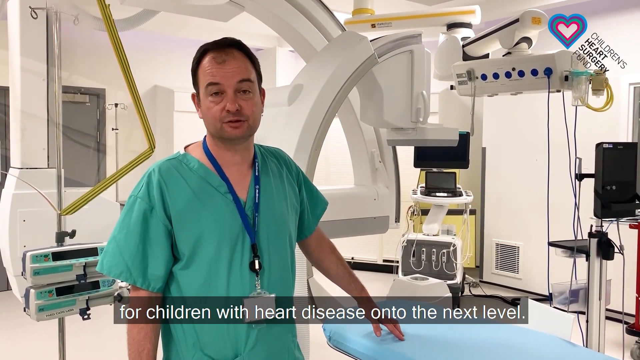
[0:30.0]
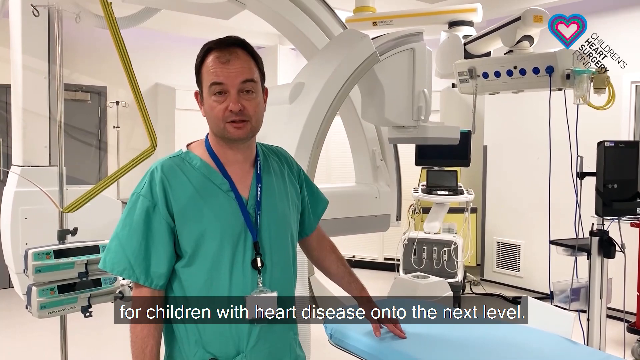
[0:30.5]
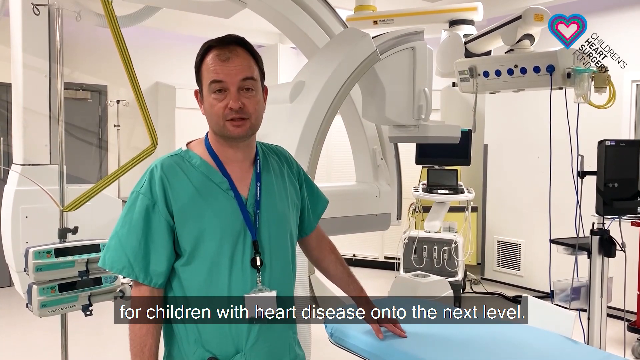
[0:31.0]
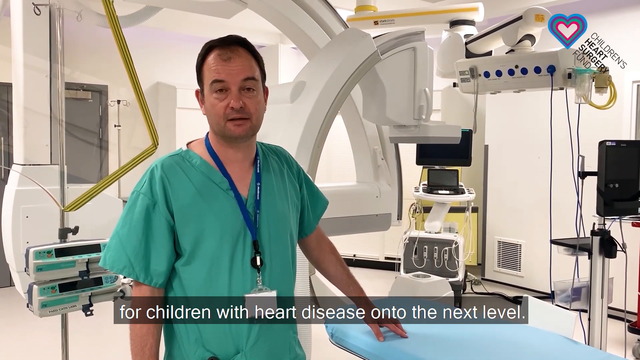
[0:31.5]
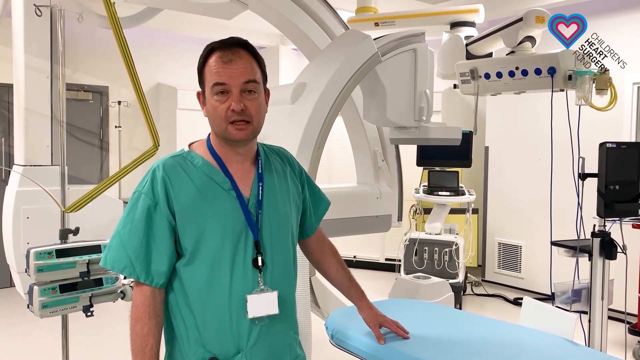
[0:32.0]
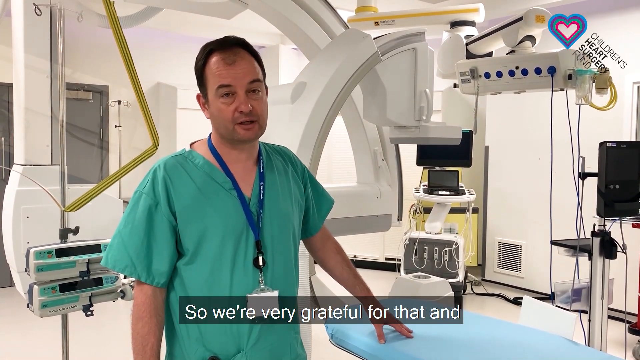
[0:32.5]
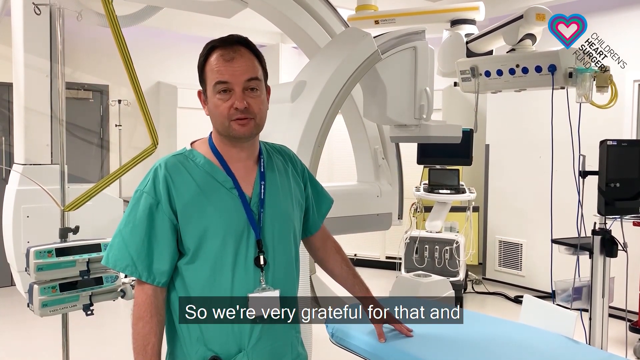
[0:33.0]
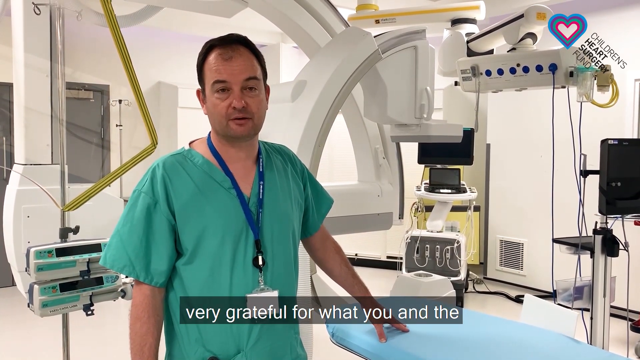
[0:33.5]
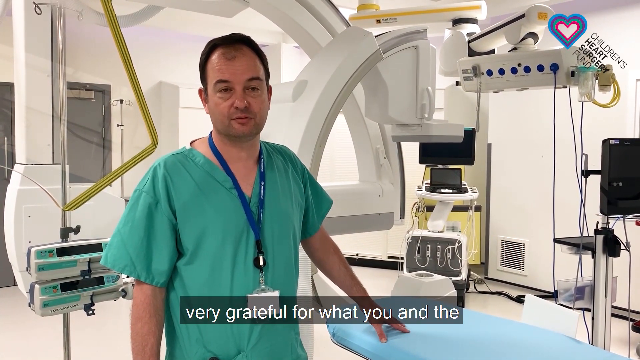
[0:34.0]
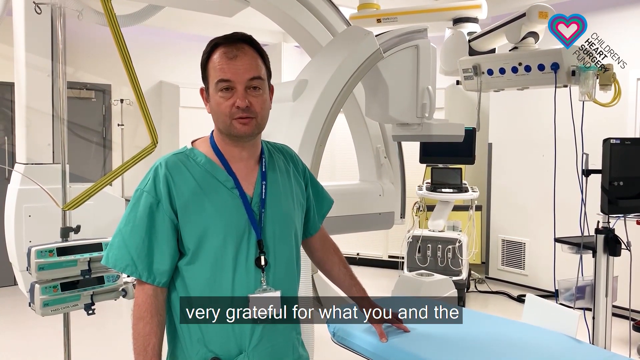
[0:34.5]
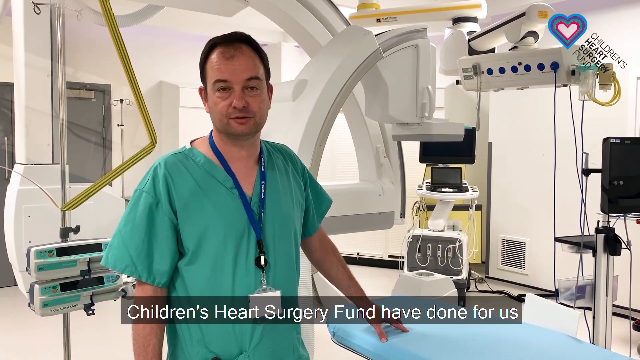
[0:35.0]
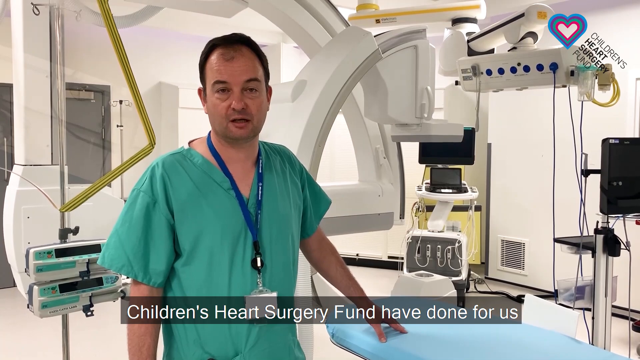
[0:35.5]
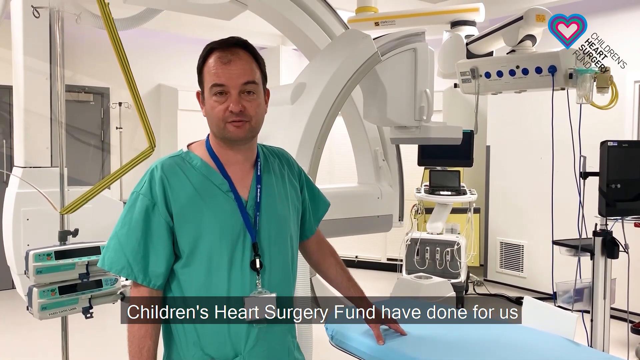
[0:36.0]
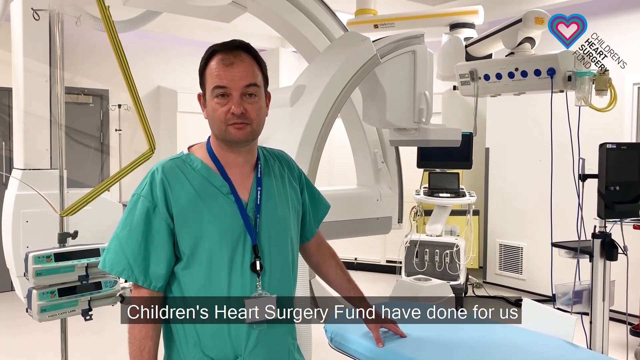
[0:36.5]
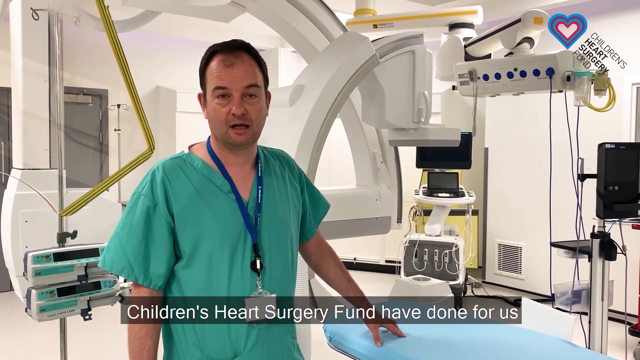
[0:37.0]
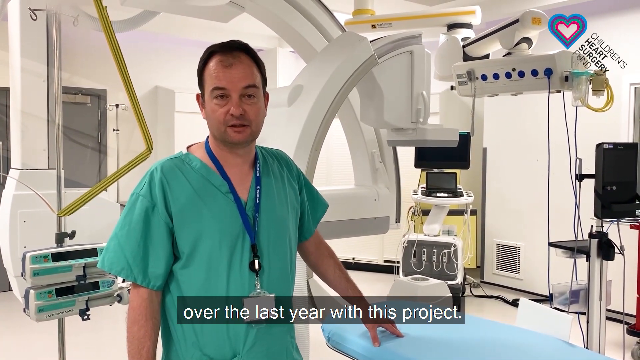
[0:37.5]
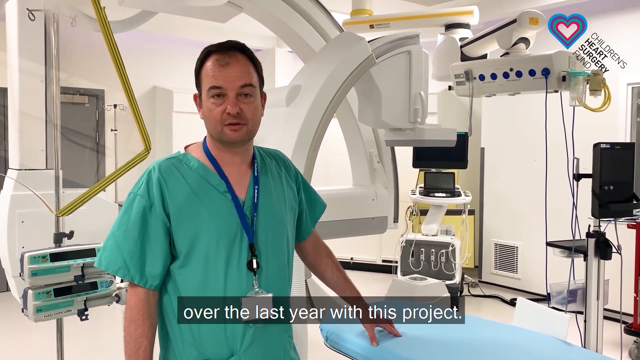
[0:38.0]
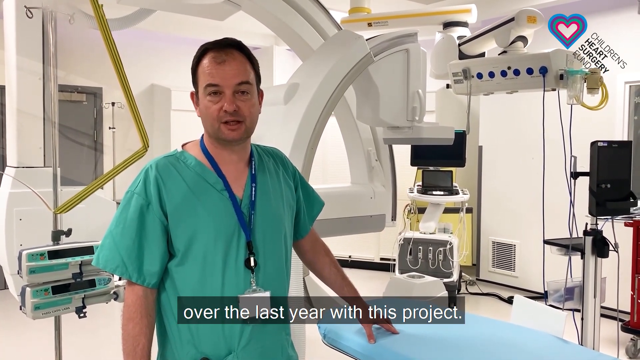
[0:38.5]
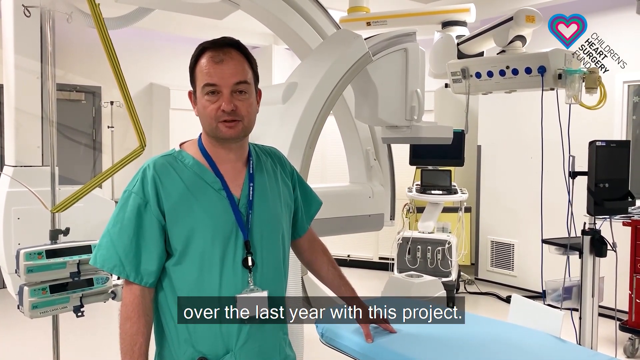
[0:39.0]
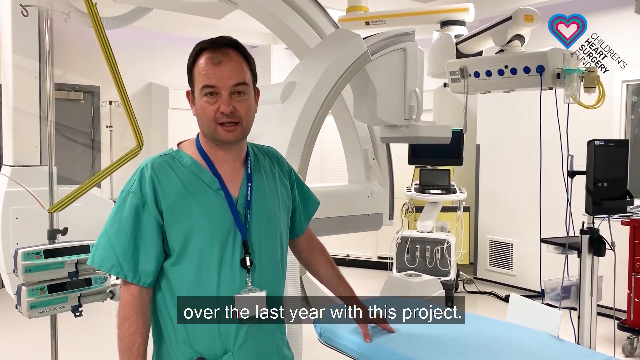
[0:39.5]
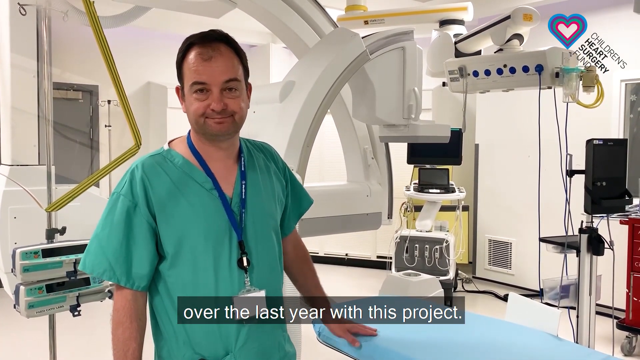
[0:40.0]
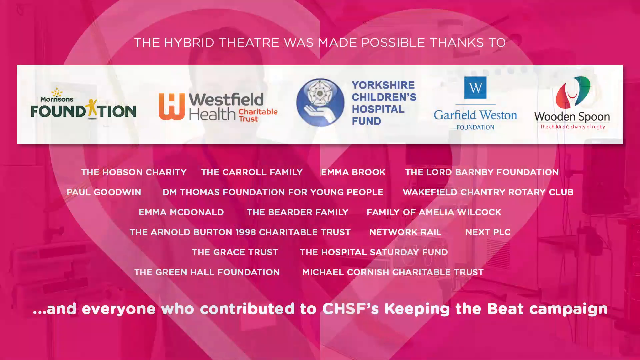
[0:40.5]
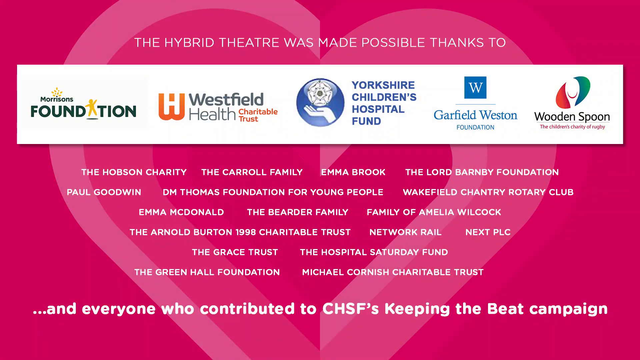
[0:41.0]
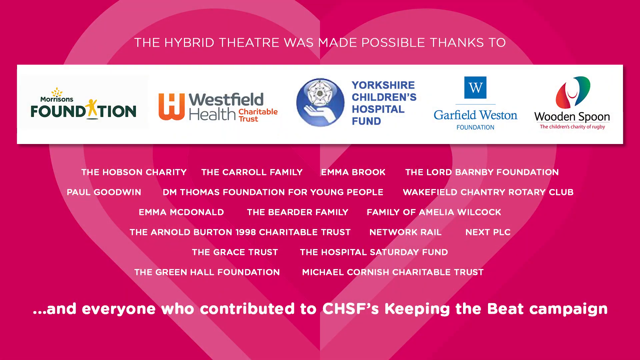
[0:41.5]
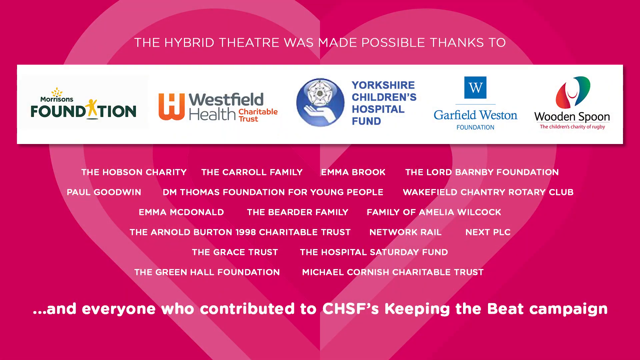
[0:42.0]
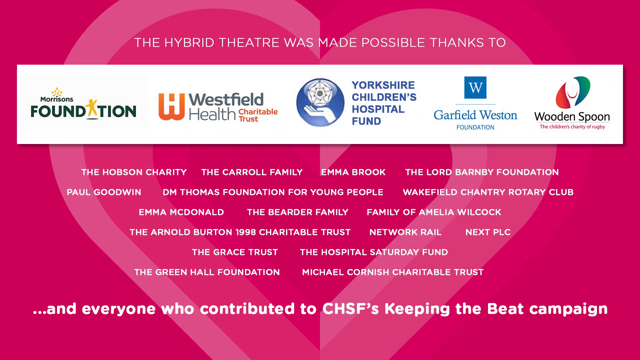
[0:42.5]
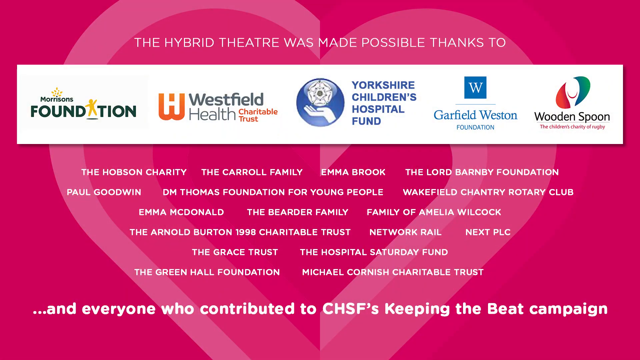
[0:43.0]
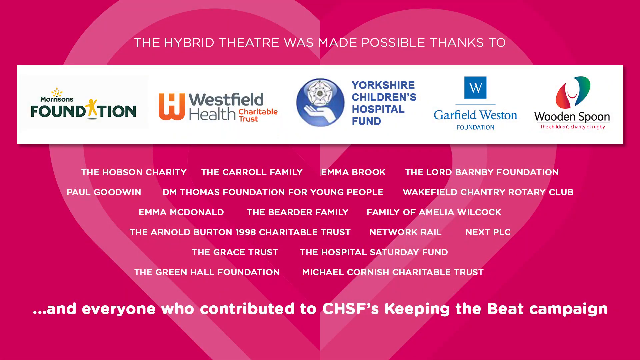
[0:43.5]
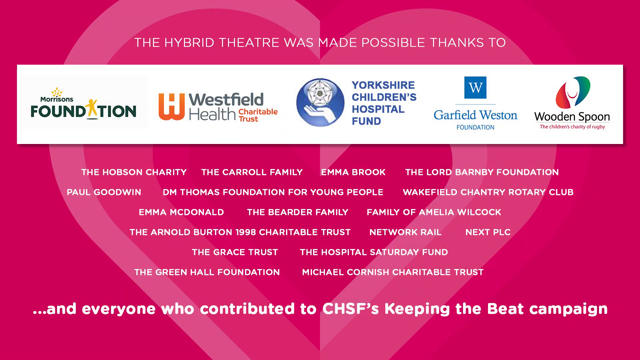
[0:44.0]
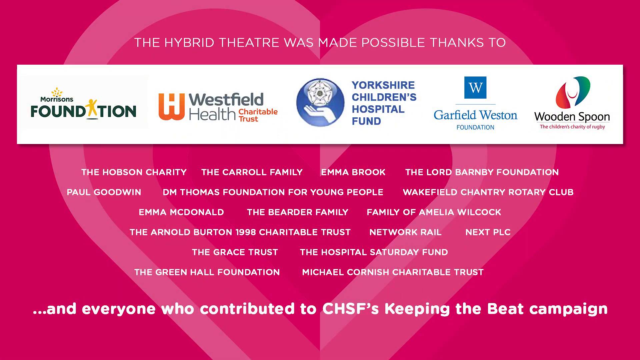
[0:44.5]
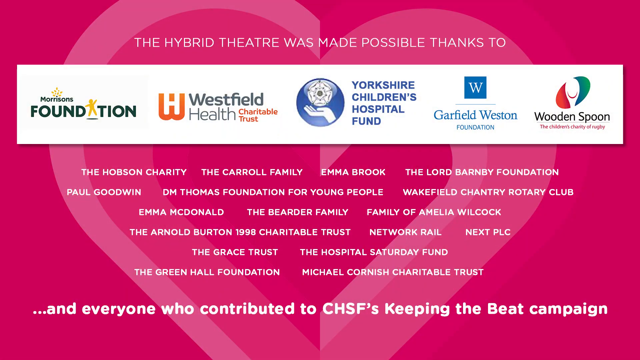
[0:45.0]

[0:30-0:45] Dr. John Thompson continues talking, and the subtitles apparently include the words "over the last year with this project." At the end comes an end screen with text at the top reading "the hybrid theater was made possible thanks to," followed by five companies listed from left to right on a sort of white horizontal background: Morrison's Foundation, Westfield Health, Yorkshire Children's Hospital Fund, Garfield Weston, and Wooden Spoon. A couple of other companies appear further down, and text at the bottom reads "and everyone who contributed to CHSF's Keeping the Beat campaign."